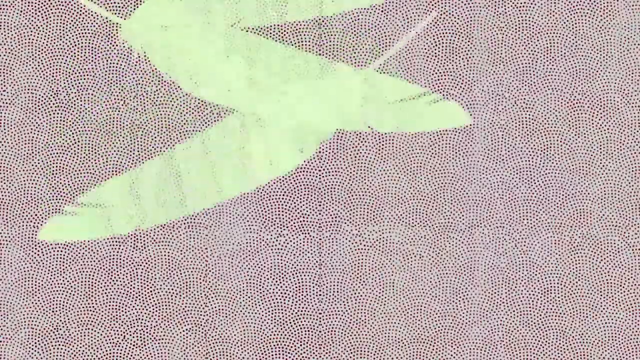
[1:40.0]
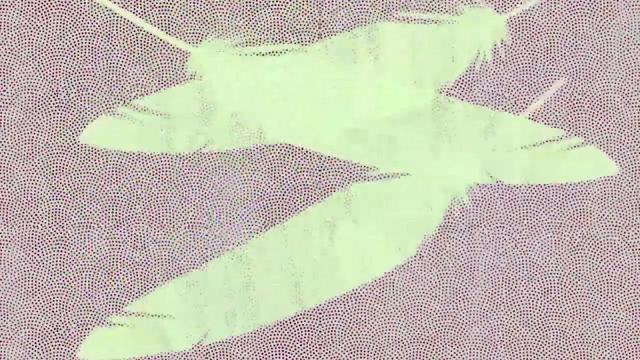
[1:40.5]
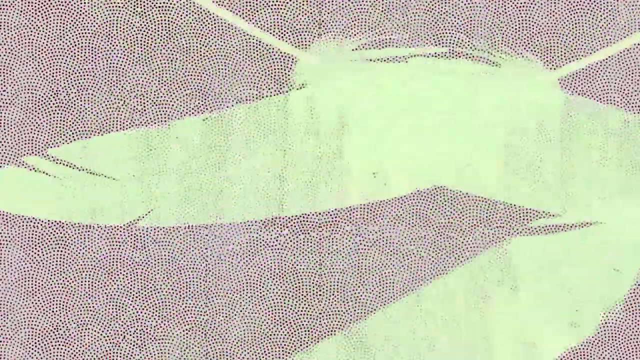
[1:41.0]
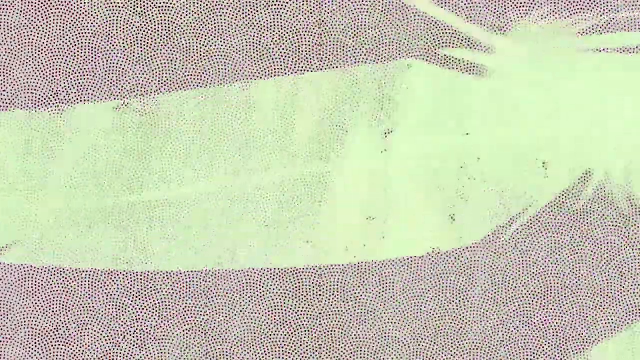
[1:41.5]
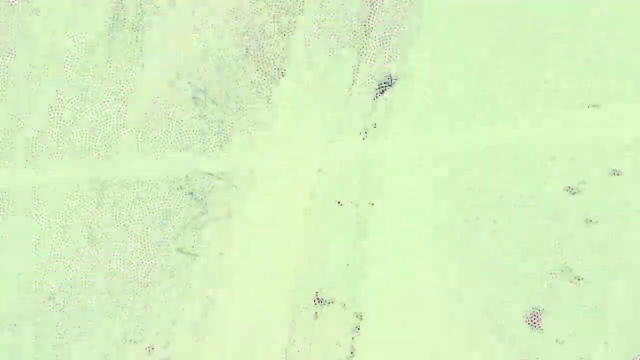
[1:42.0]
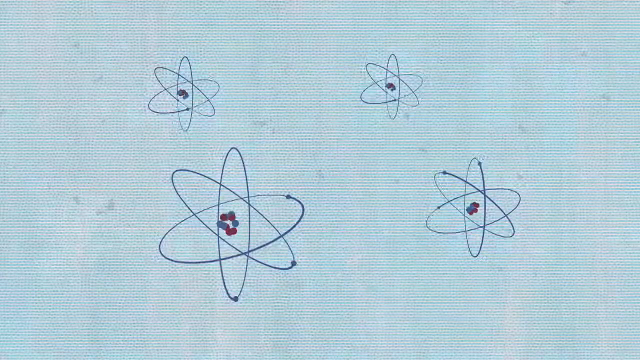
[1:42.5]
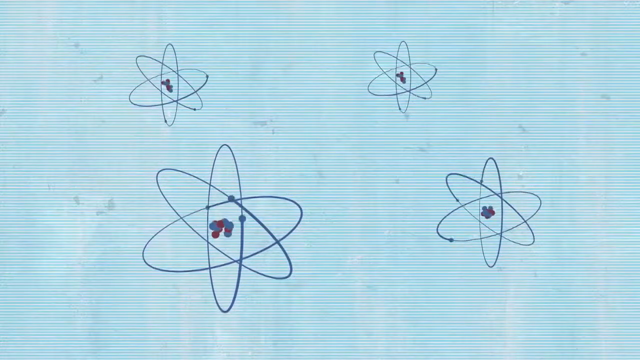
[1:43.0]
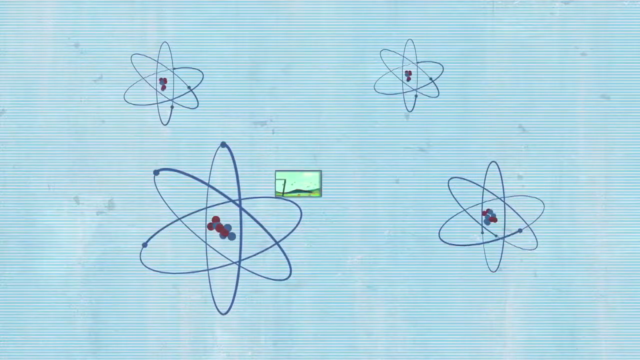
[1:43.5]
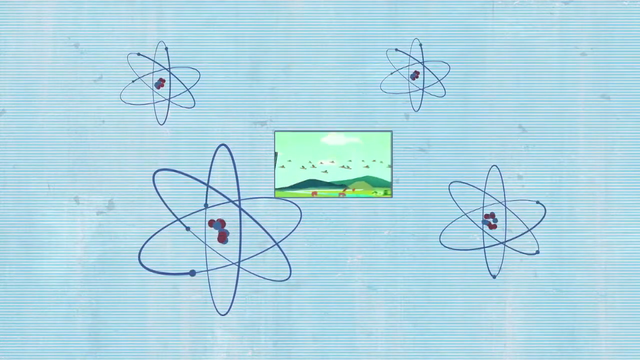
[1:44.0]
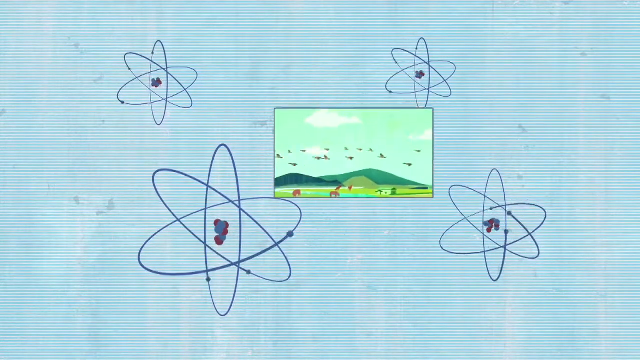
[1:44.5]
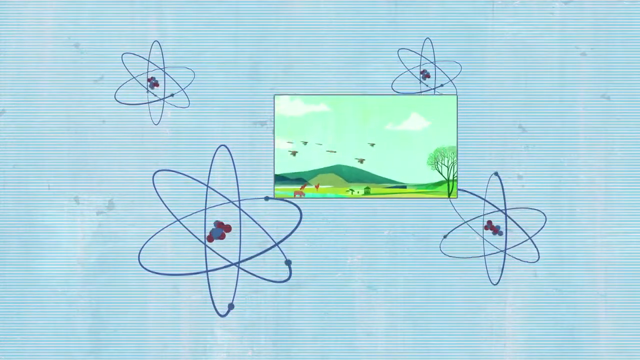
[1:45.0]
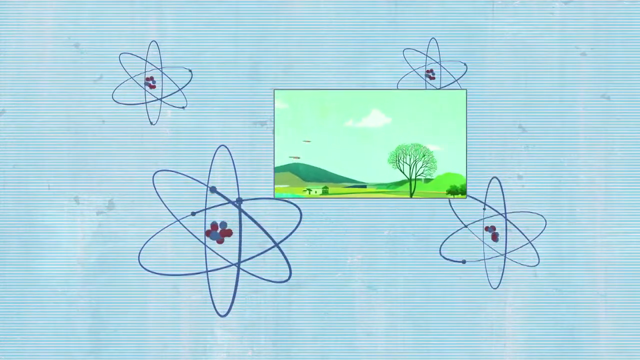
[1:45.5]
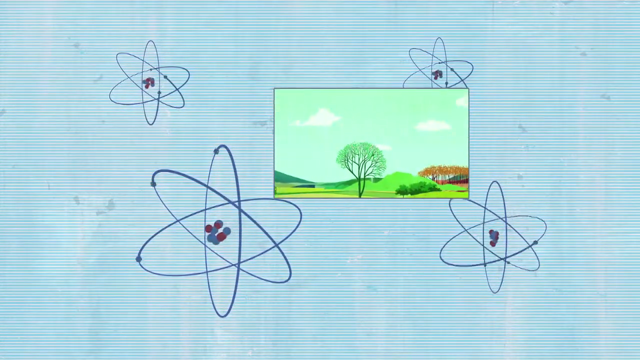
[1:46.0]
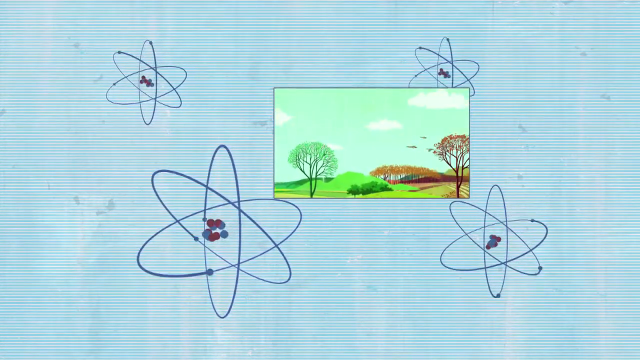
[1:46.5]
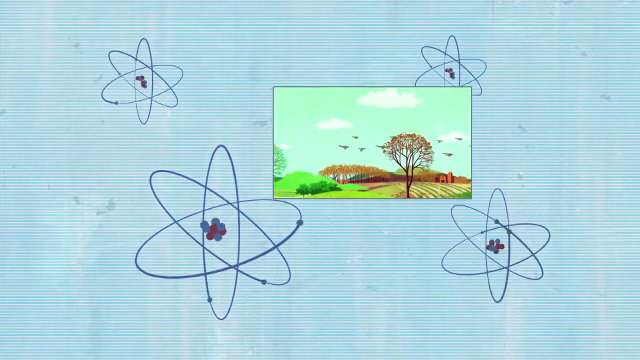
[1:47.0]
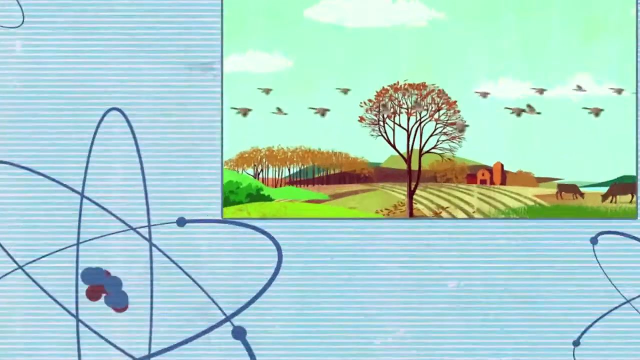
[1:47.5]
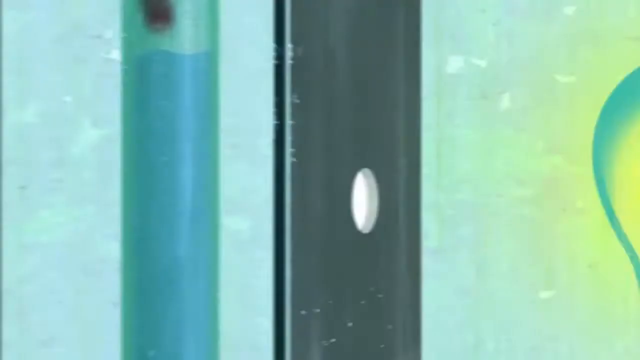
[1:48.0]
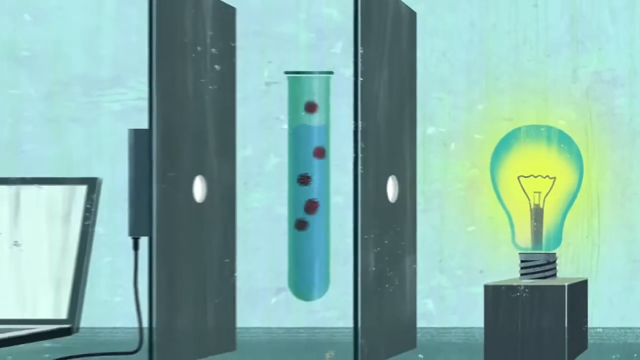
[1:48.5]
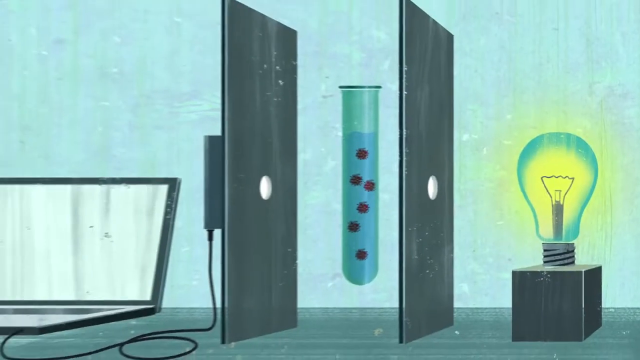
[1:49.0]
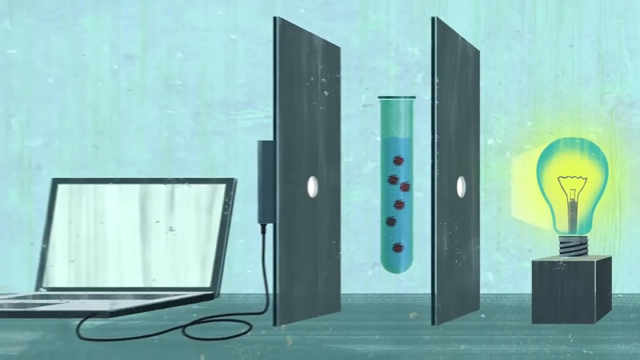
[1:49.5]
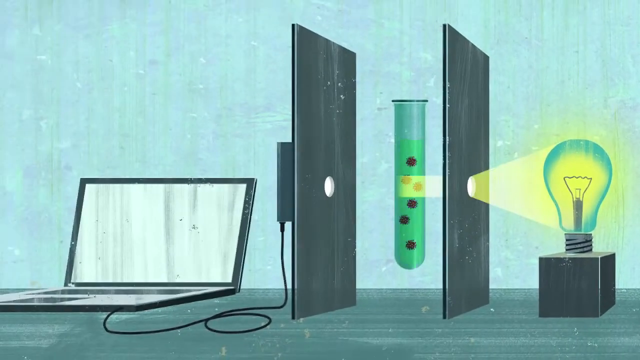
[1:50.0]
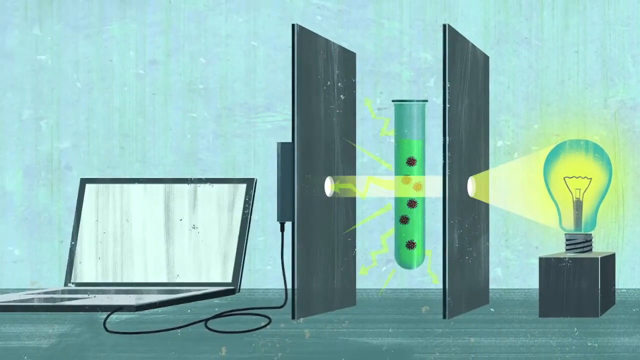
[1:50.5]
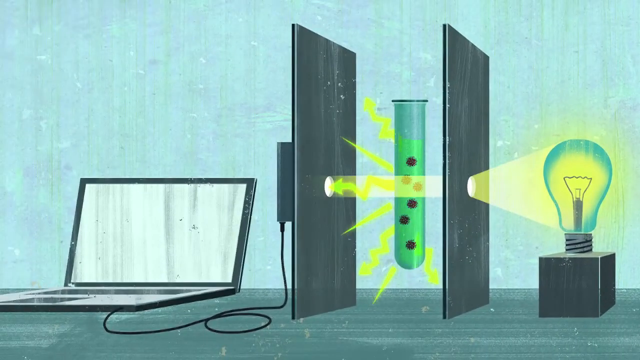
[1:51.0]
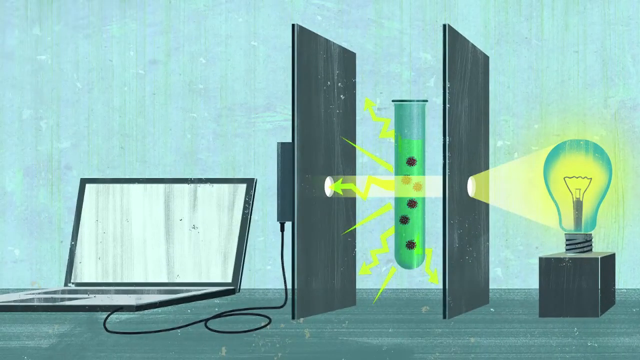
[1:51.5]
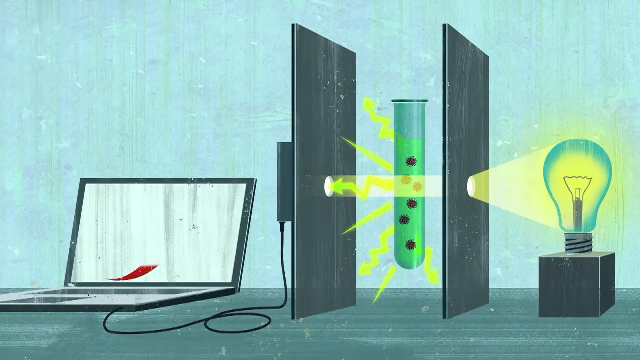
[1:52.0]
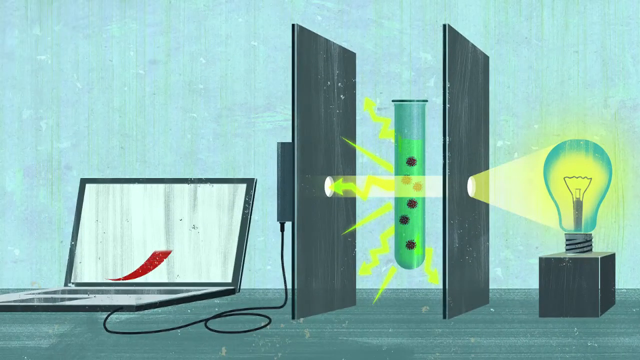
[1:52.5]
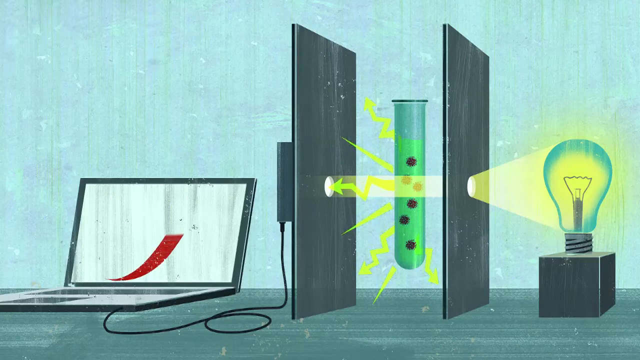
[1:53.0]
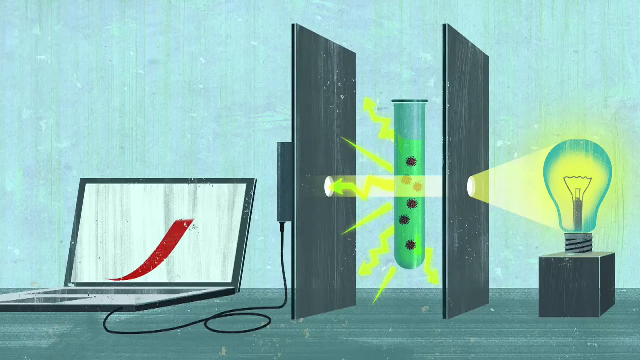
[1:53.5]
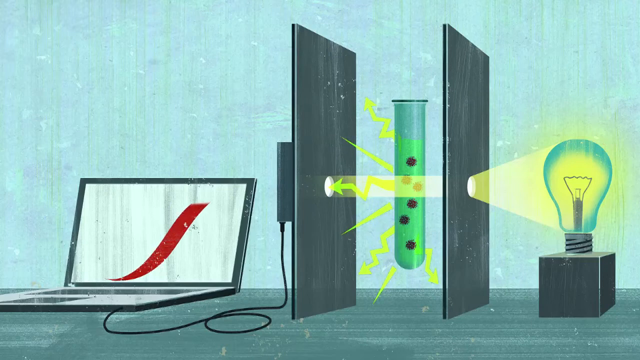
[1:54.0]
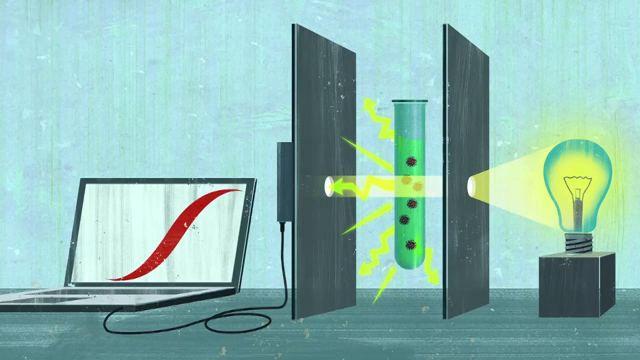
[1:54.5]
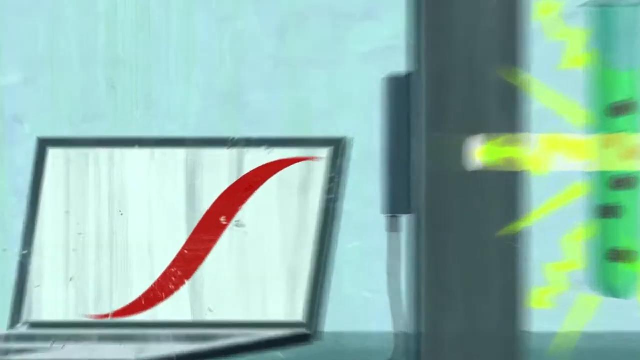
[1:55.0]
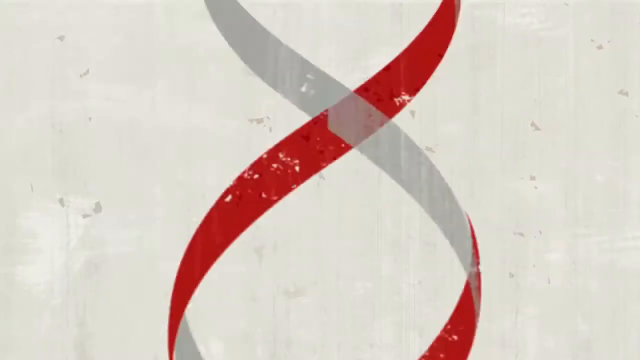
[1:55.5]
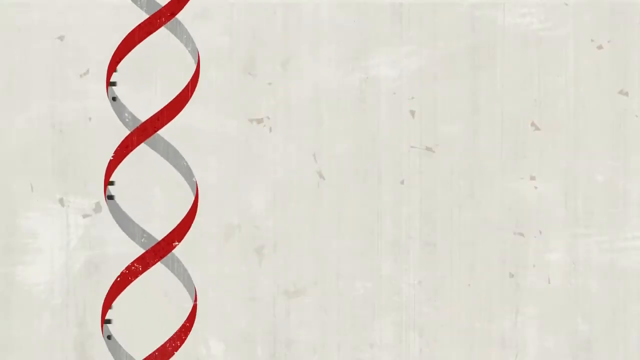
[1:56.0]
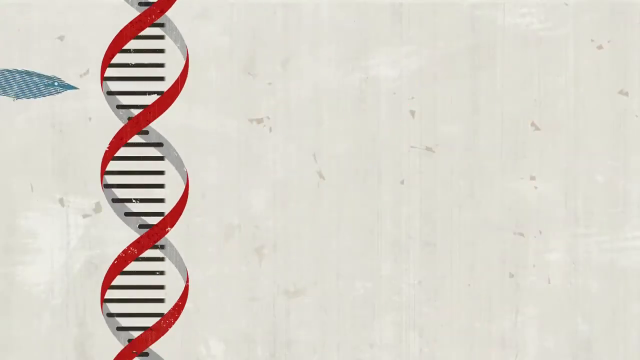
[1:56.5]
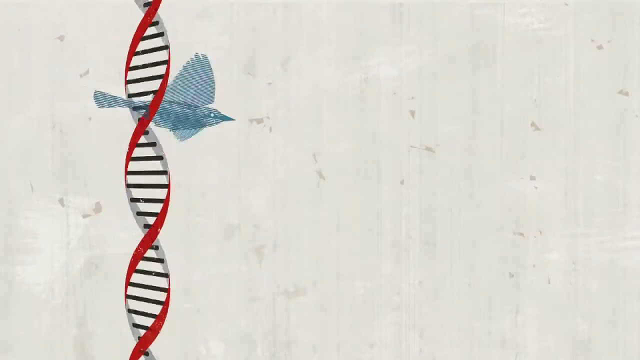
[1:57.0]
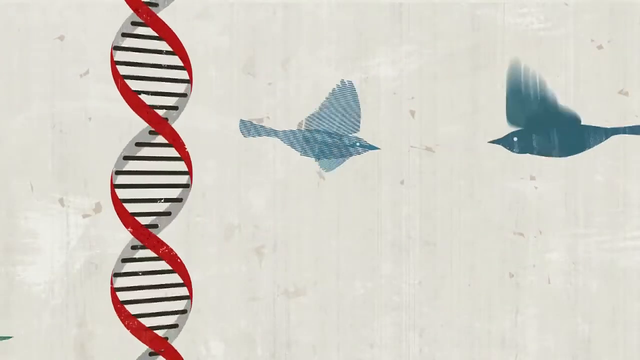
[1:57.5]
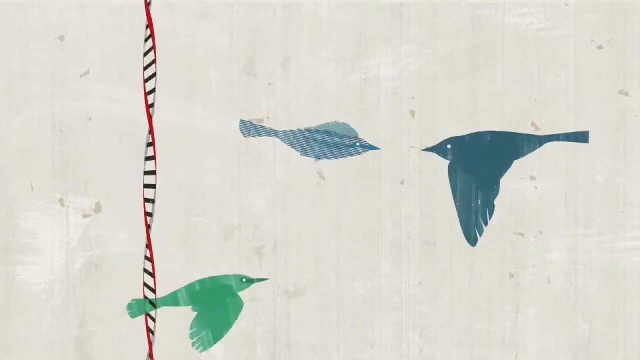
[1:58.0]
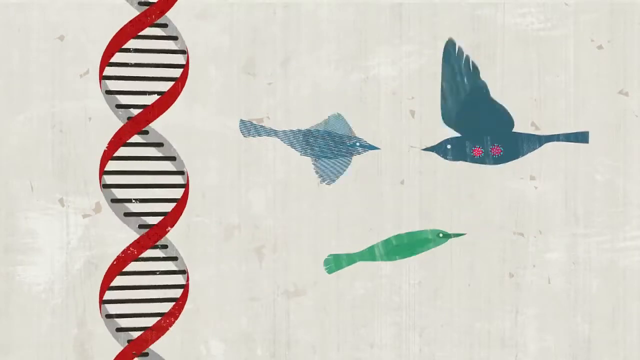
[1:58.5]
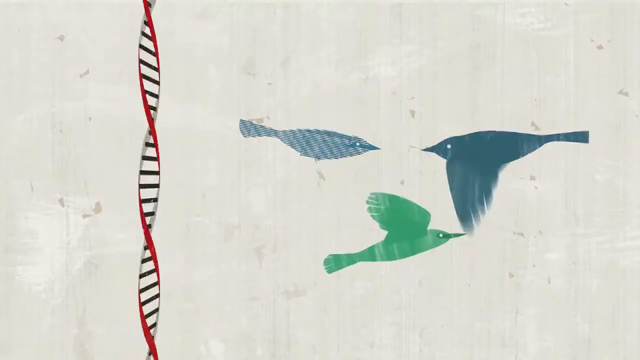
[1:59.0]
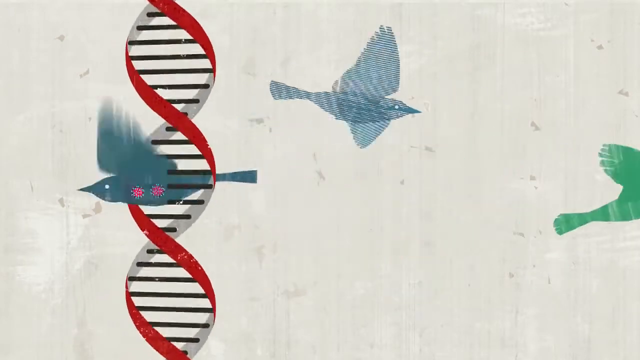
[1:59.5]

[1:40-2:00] Red dots are in the background, and what appear to be three greenish feathers float down; one of them covers the camera view. The scene changes to four atoms with little balls spinning around their axes, and in the middle is an image of the geese flying, moving from left to right across the green farmland. The view zooms in very close to the image and then moves to a new scene that starts with what looks like a desk. A beaker is the focus, with a light bulb on the right side. There are two wood-looking panels in a grayish black color, each with a circle cut in its center. The light goes through them, and the beaker in the middle holds green liquid with little red dots or viruses. On the computer, a red line moves about and looks like a DNA helix, leading into a new scene with a spinning DNA helix and birds moving about.